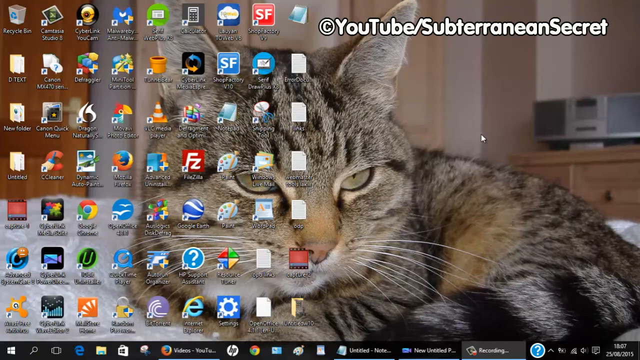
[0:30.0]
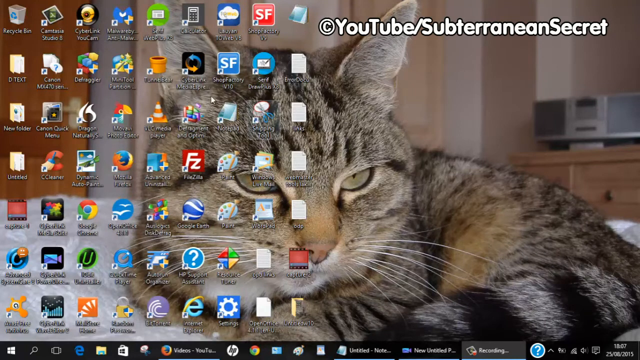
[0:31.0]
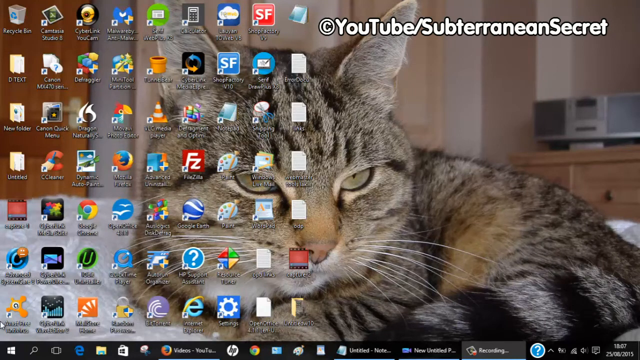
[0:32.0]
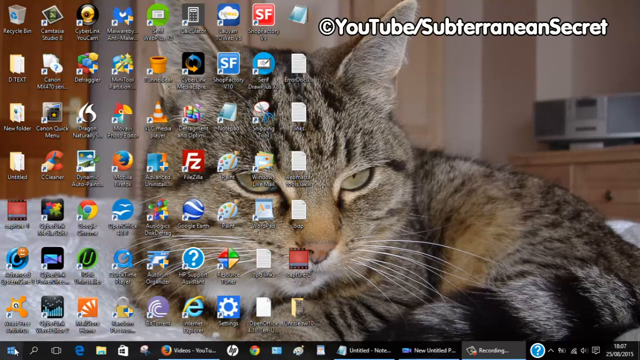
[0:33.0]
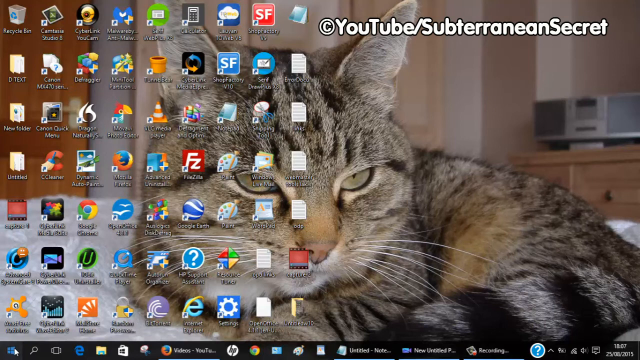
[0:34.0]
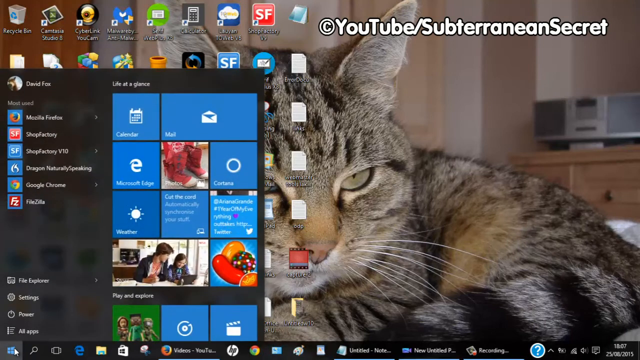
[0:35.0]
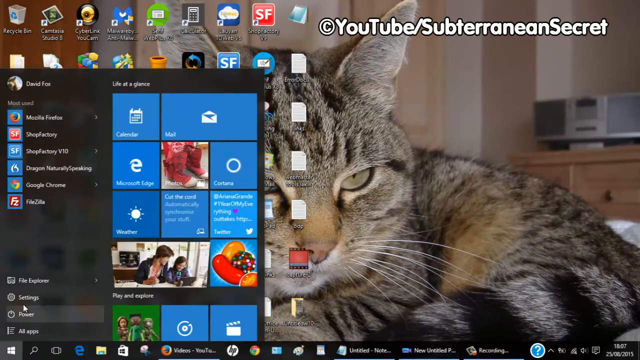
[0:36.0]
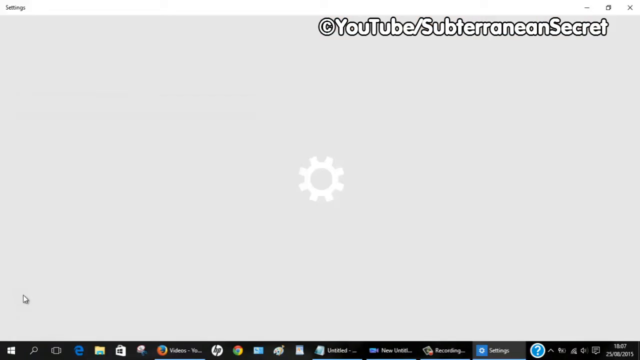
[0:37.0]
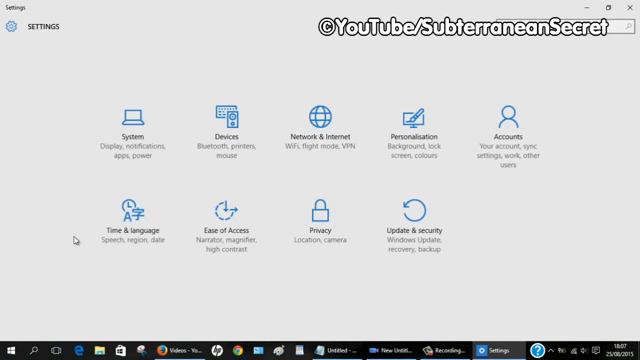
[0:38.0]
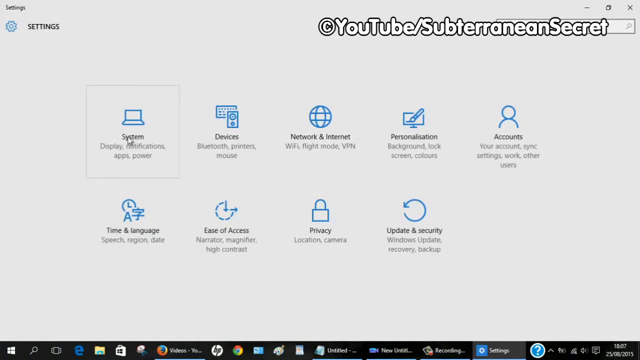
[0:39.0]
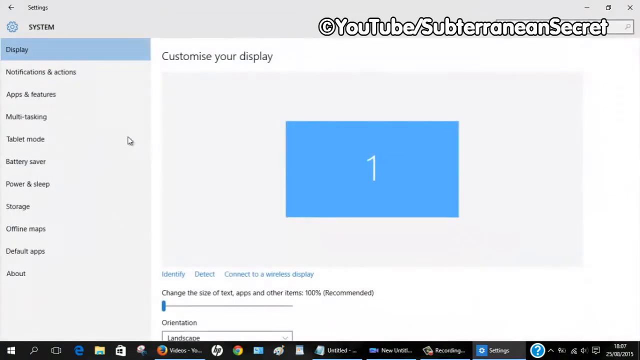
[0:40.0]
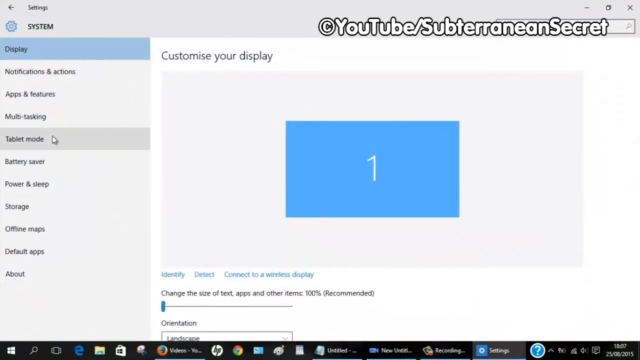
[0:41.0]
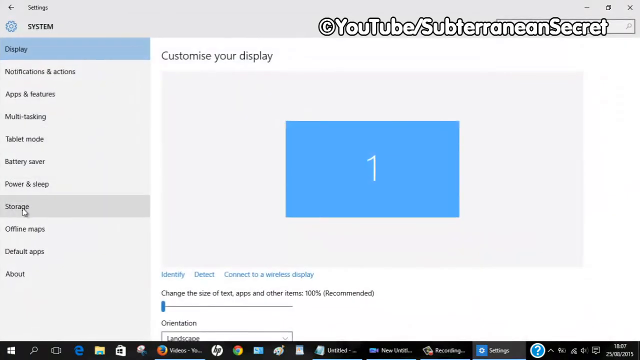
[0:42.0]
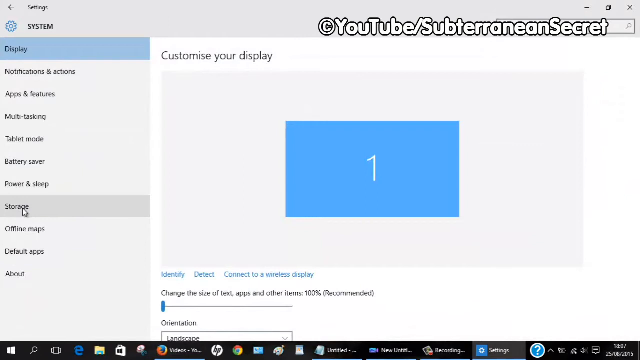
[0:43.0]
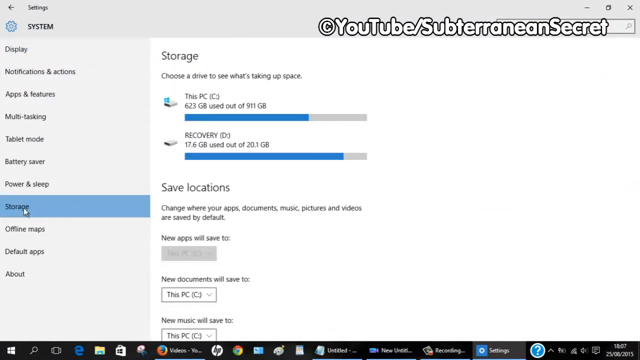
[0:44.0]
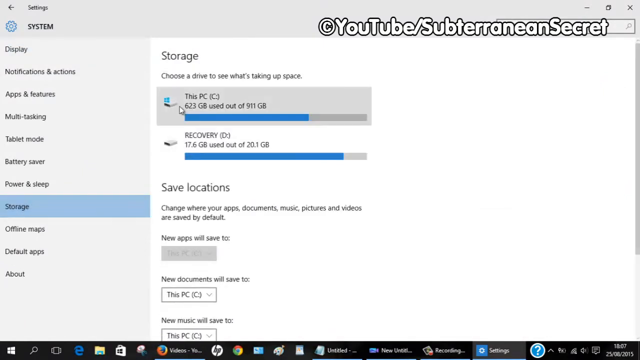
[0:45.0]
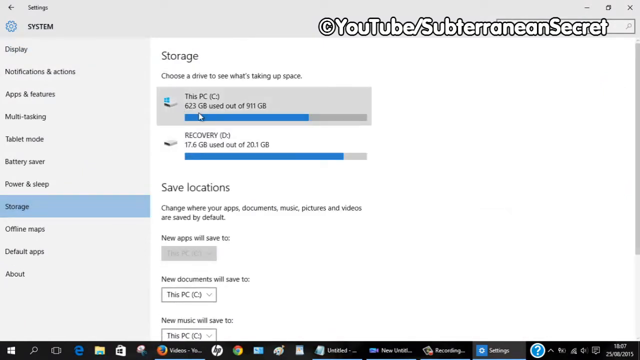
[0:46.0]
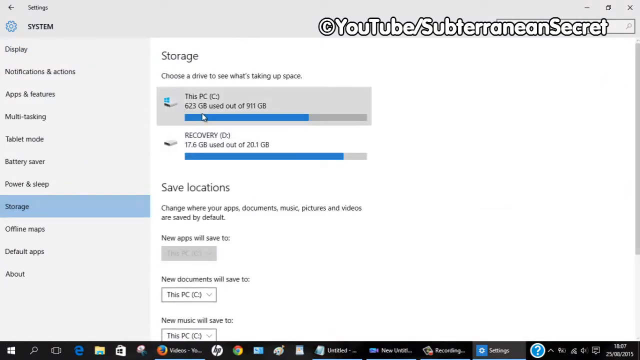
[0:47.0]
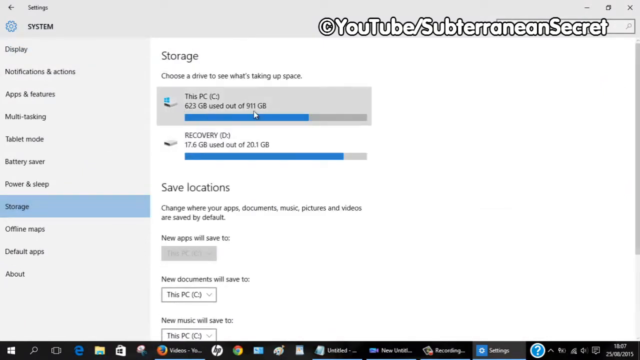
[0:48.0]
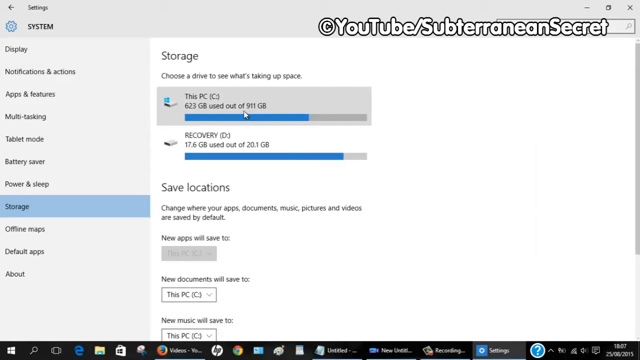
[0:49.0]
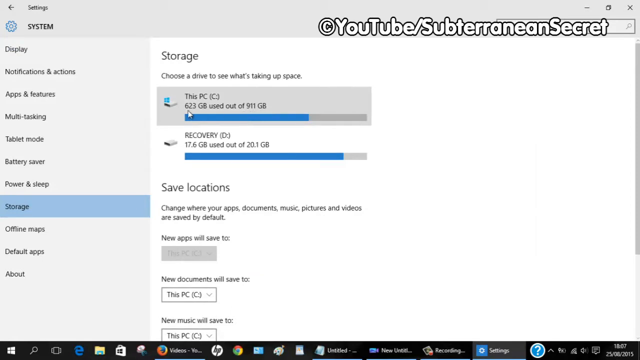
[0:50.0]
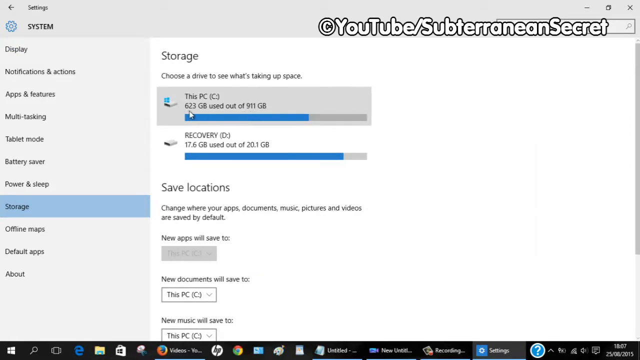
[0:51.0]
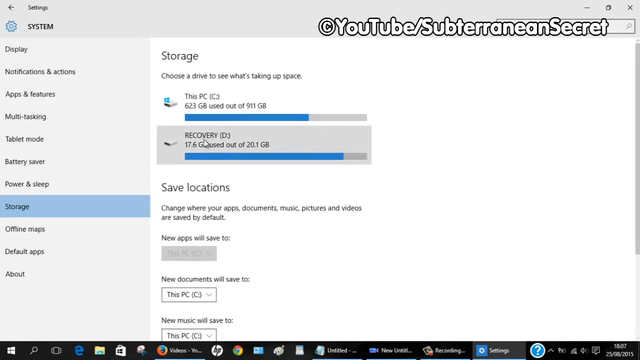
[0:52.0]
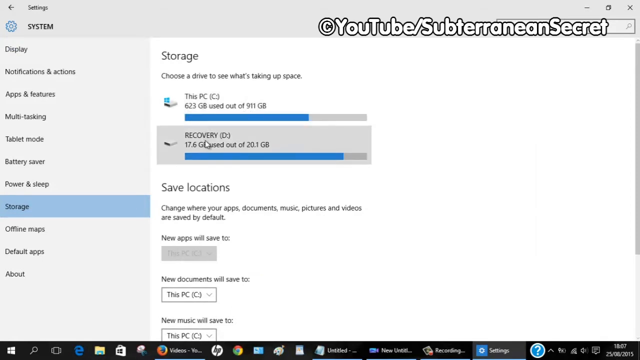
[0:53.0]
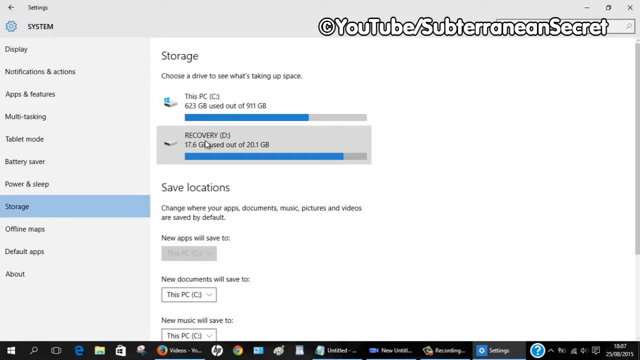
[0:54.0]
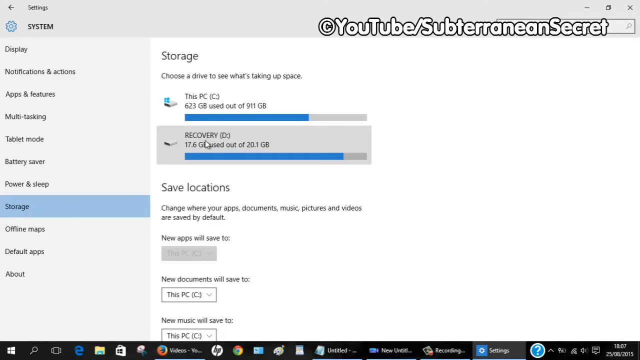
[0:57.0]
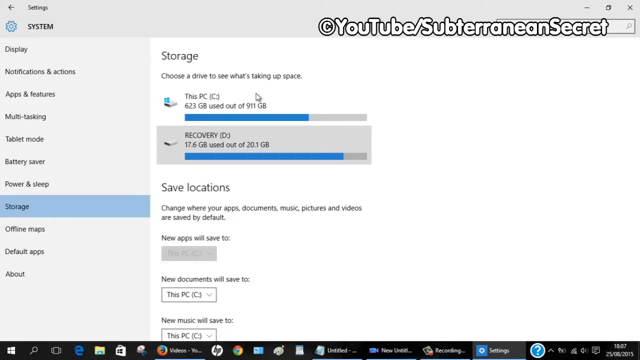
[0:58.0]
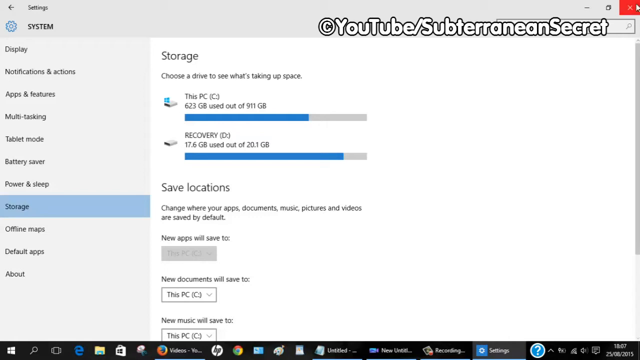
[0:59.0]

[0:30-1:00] The desktop home screen with the wallpaper of a cat lying on a bed is shown. The Windows icon is clicked and a small pop-up menu appears. Then the settings screen opens and two rows of icons appear. The top row has system, devices, network and internet, personalization and accounts; the second row beneath includes ease of access, privacy, and update and security. The cursor clicks on system, which has a side menu on the left with tabs for display, notifications and actions, apps and features, multitasking, tablet mode, battery saver, power and sleep, storage, offline maps, default apps, and about at the bottom of the list. On the right it says "customize your display," and in the center is a blue rectangle with the number 1 written on it in white. Underneath is a slider bar that says "change the size of text, apps and other items."